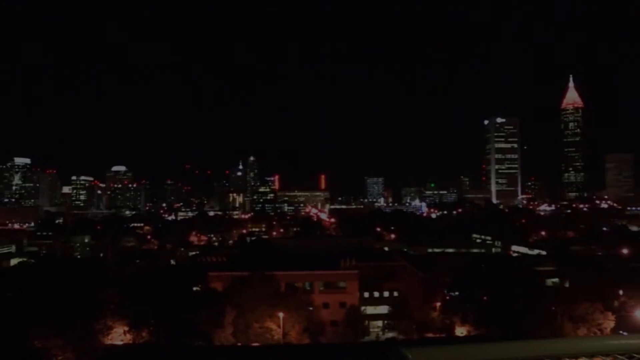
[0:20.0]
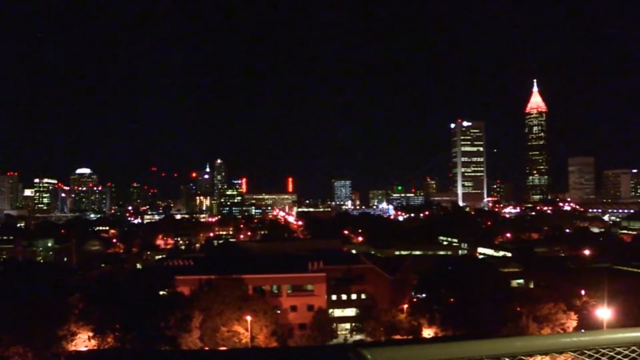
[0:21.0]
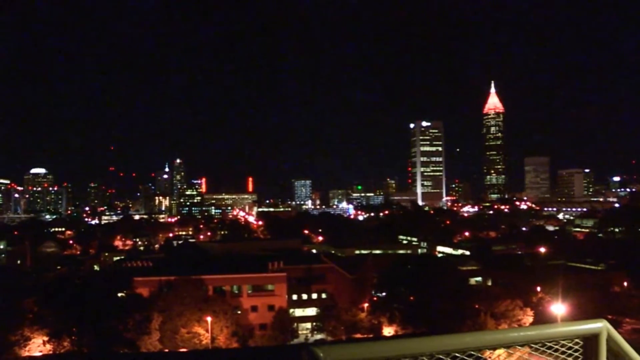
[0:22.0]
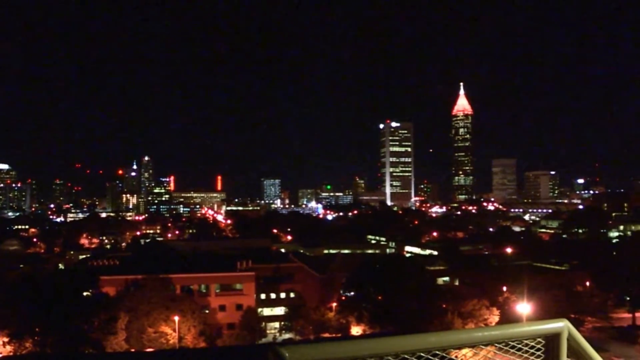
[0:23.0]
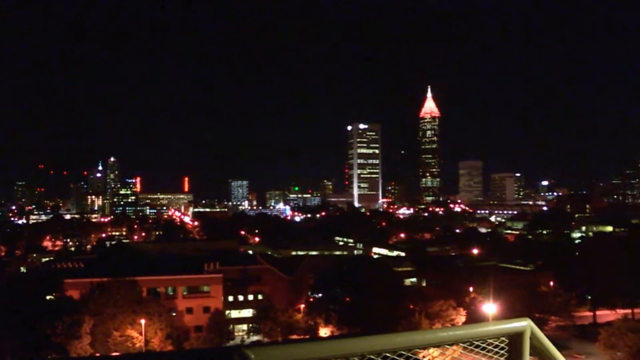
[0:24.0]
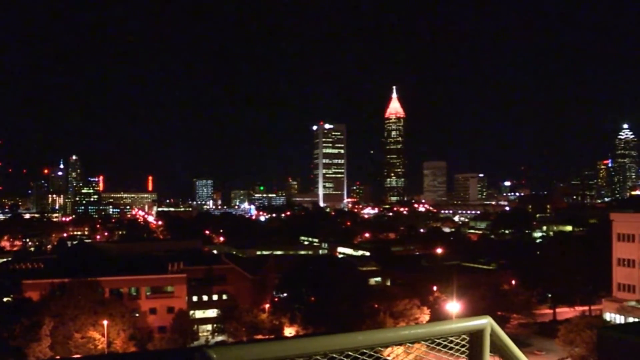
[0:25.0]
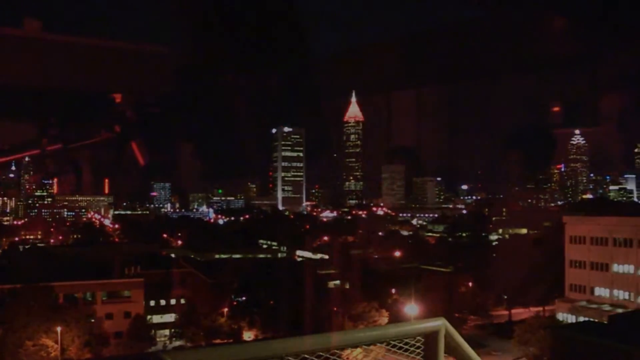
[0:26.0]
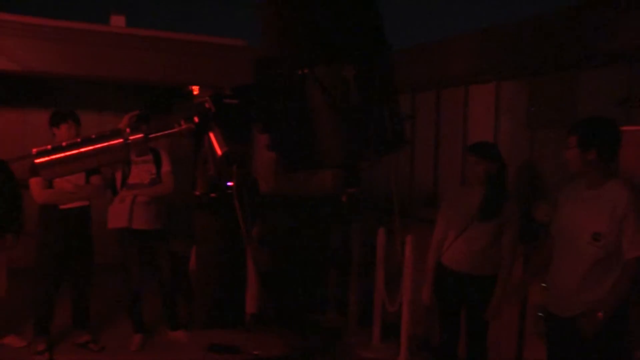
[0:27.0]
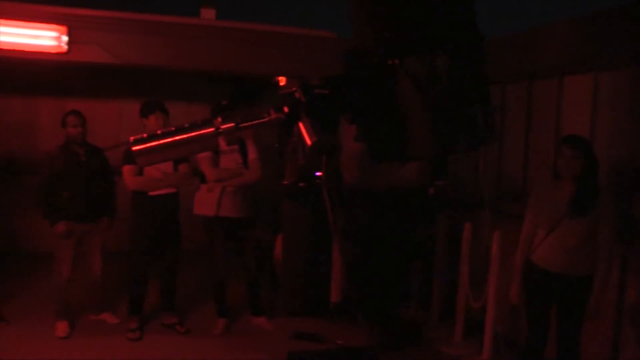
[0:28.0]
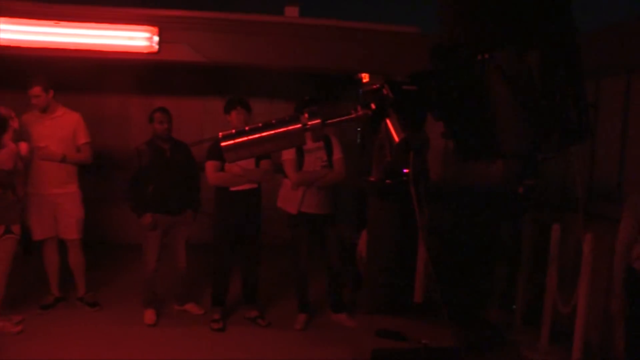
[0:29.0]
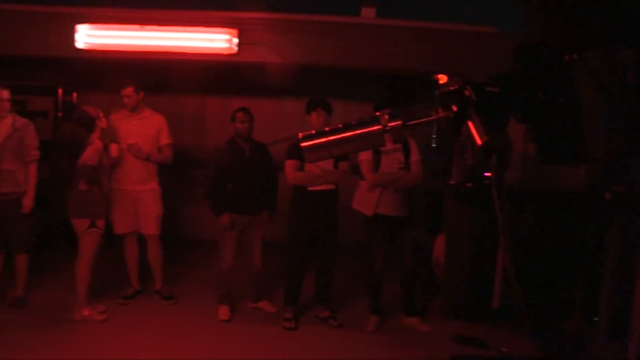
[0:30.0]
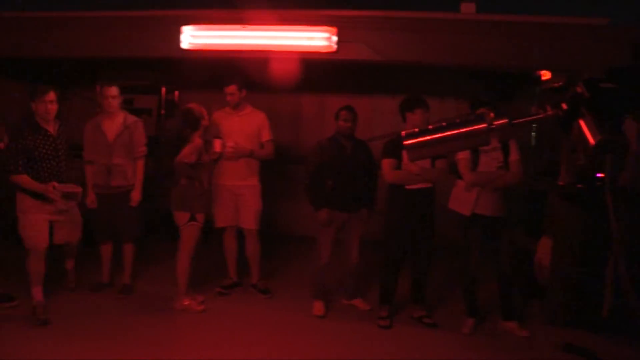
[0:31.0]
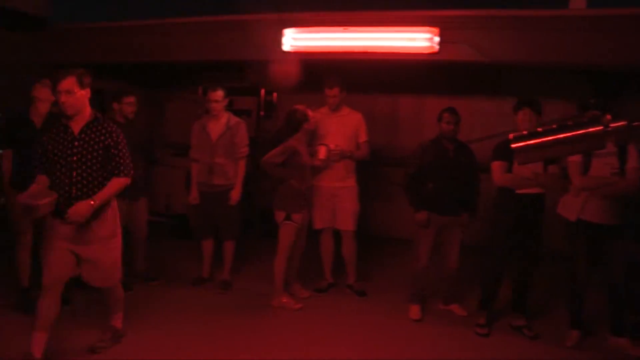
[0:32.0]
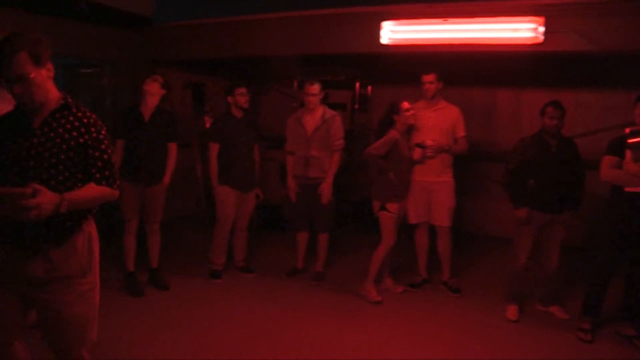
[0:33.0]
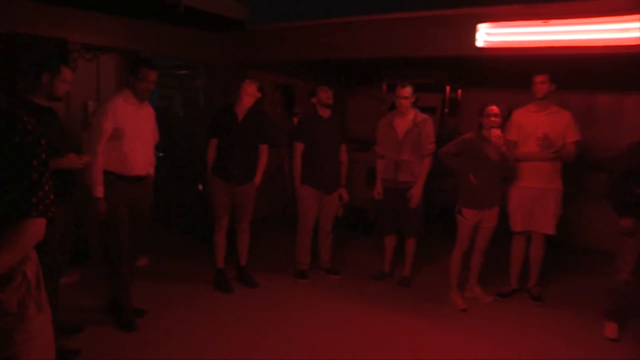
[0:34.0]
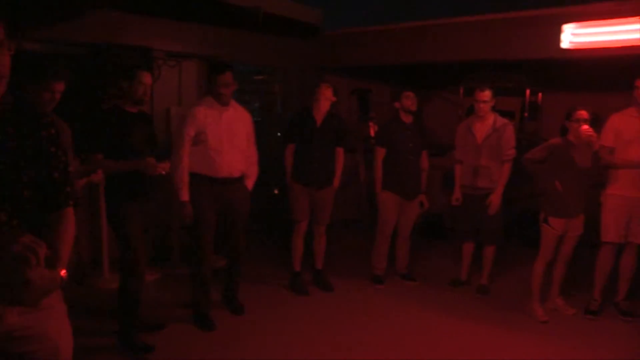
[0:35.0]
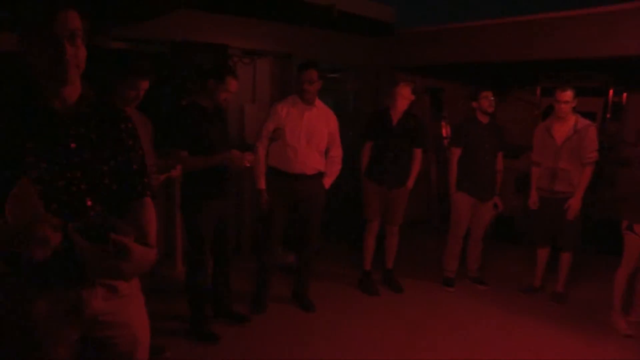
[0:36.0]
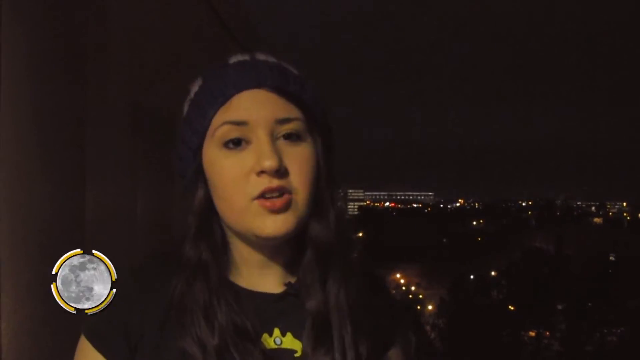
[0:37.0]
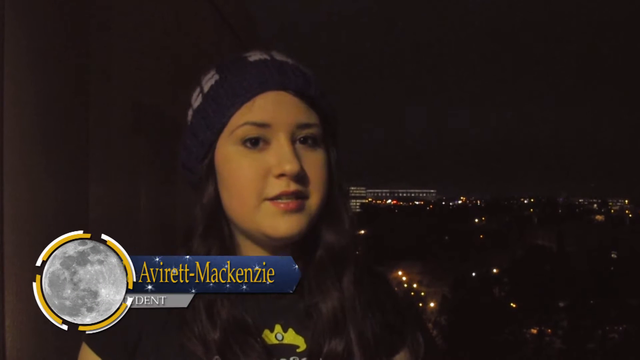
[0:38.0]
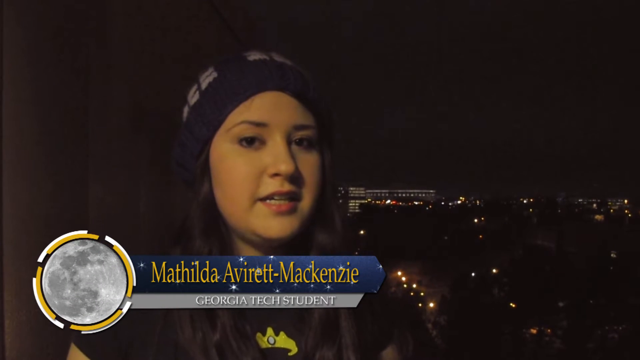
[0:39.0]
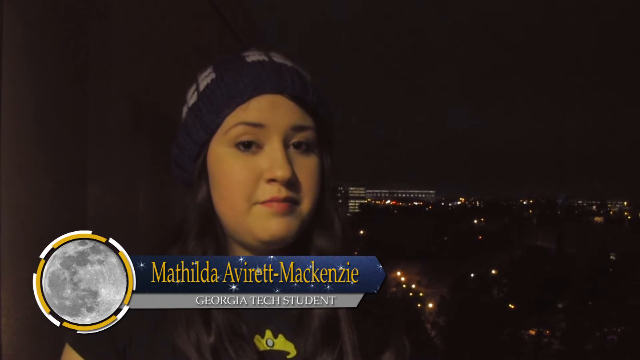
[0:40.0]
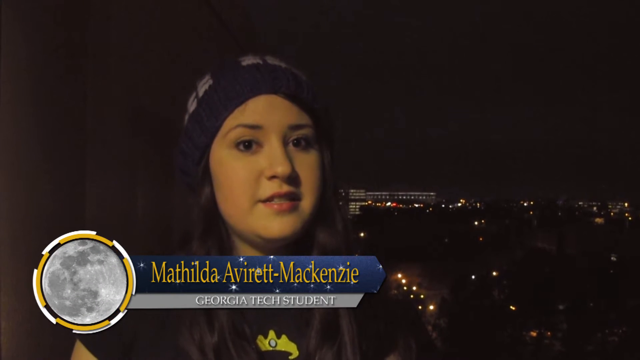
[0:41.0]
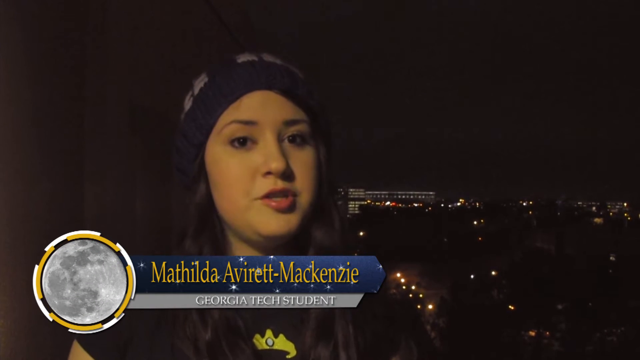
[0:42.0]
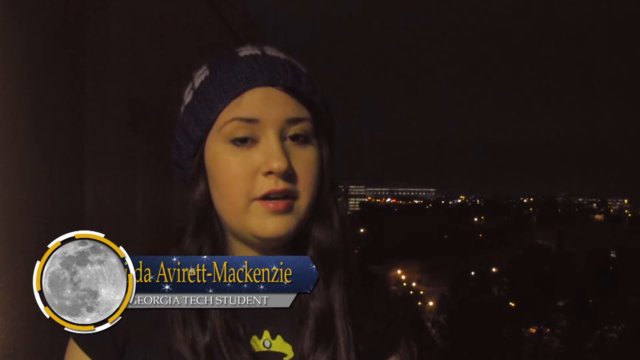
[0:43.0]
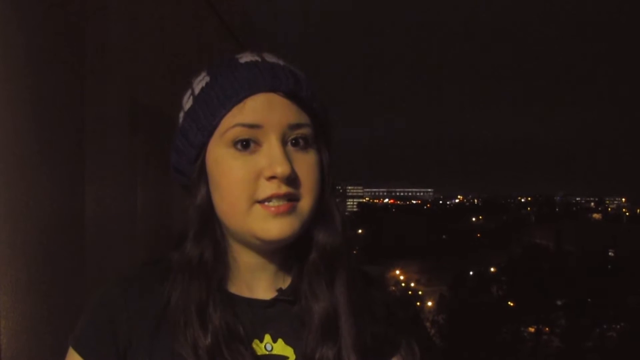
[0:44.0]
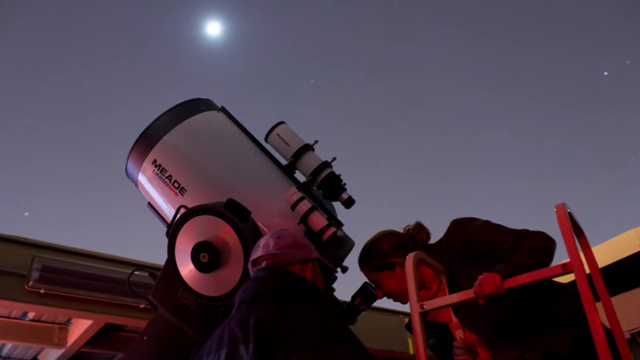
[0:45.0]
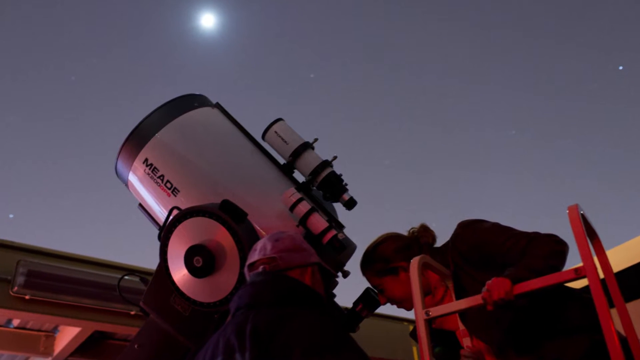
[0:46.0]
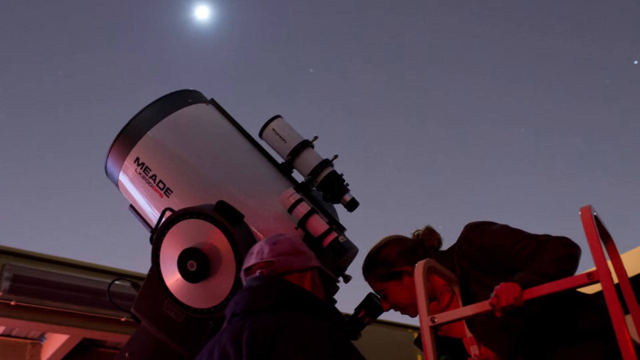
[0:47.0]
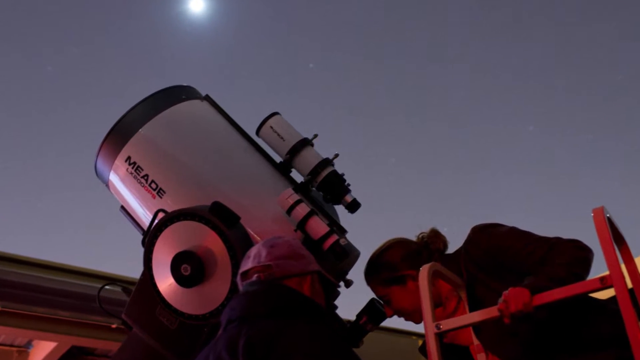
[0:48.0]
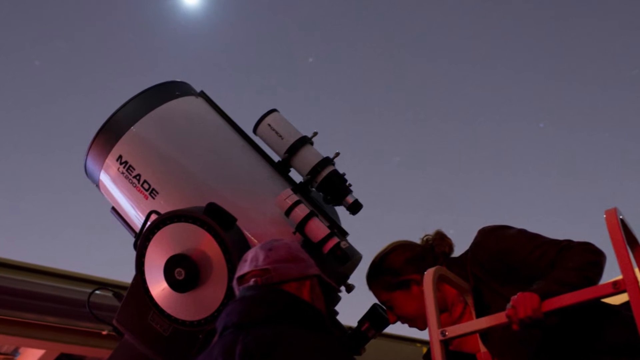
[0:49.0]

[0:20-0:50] At night, the video pans to the right and shows a city. A group of people waits against a building. There is a red light on part of the building; it appears to be night, but because of the red light everything is in red. People mill about, and a man in a black shirt walks. Next, a young woman appears against a city backdrop at night. She is about 22 years old, with long brown hair and brown eyes, and wears a black sweater beanie cap and a black shirt with some type of green graphic on it. A name appears on the screen, "Mathilda Avirett-Mackenzie", along with "Georgia Tech student". To the left of her name is a moon graphic with a white and gold circle around it. She is talking to the camera. The scene then changes to a telescope, with the text "Meade Laboratories". A woman in a black jacket or shirt, with light brown hair in a bun at the back of her head, leans forward and looks into the lens of the telescope while holding on to a white metal ladder. To her left, a man in a light gray cap and a dark jacket is next to the telescope, looking at her. This is a photo rather than video.